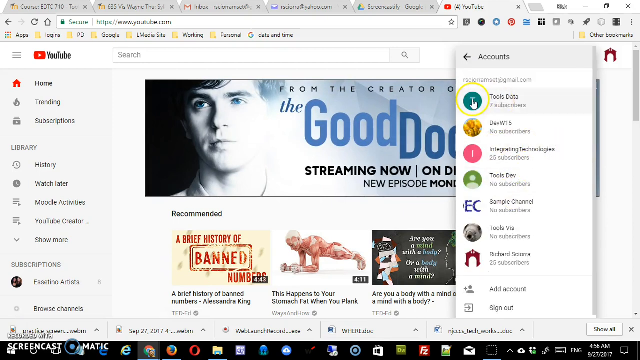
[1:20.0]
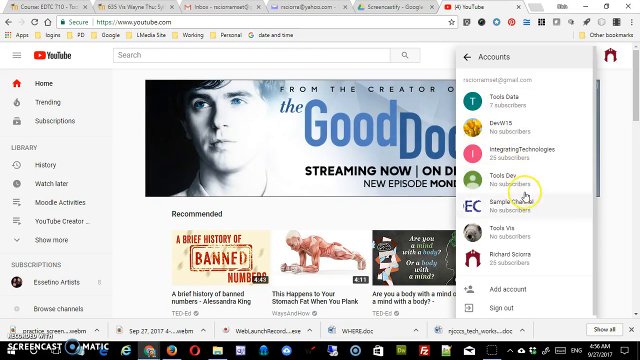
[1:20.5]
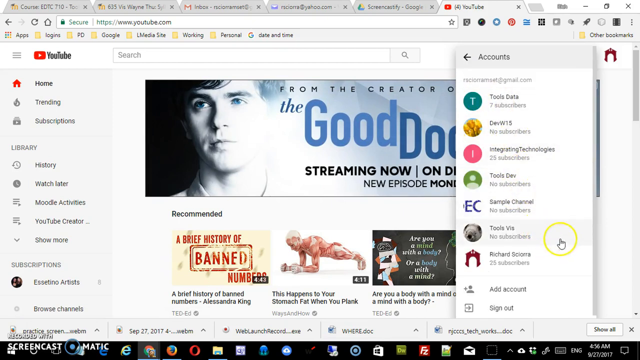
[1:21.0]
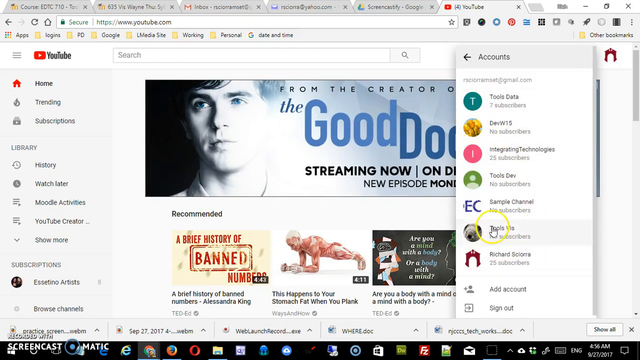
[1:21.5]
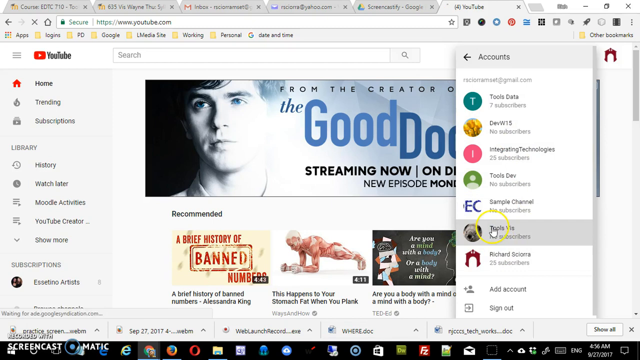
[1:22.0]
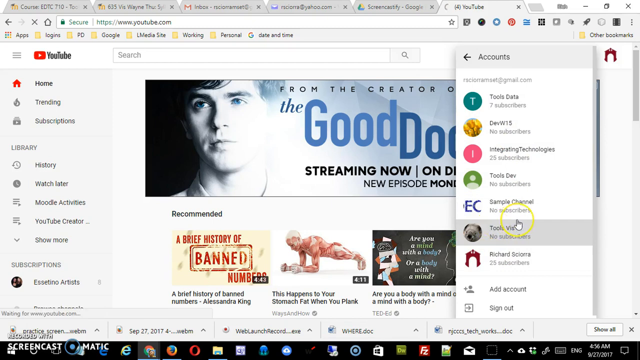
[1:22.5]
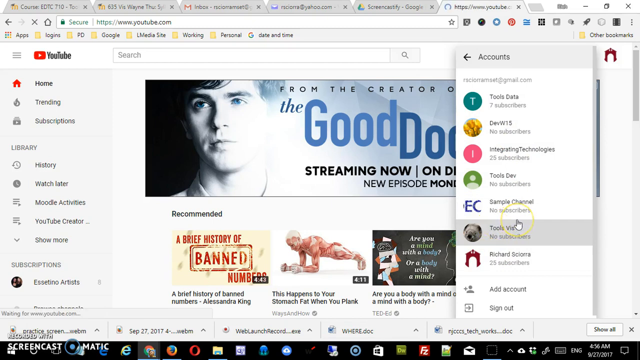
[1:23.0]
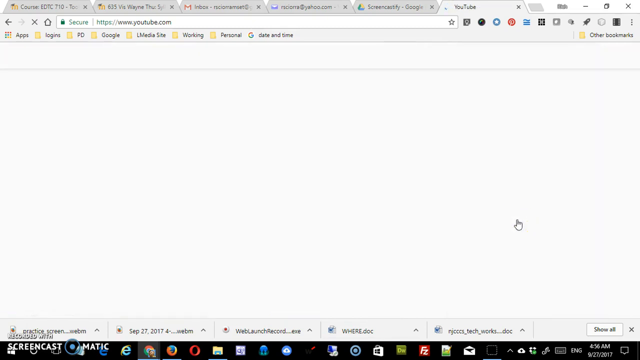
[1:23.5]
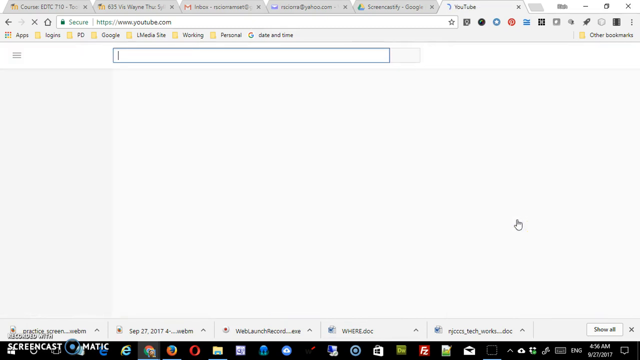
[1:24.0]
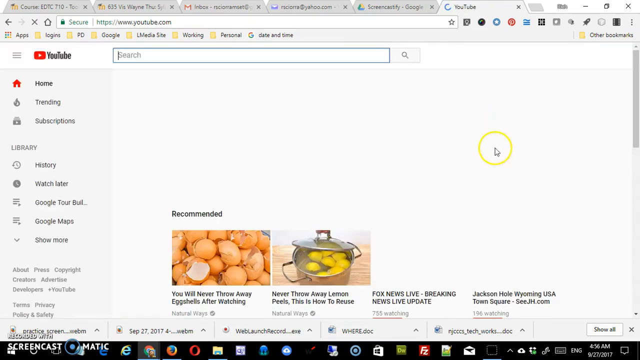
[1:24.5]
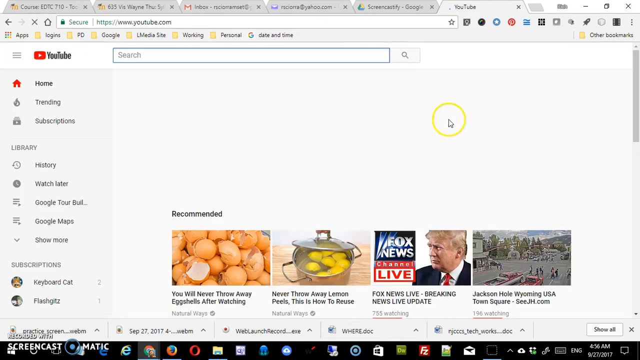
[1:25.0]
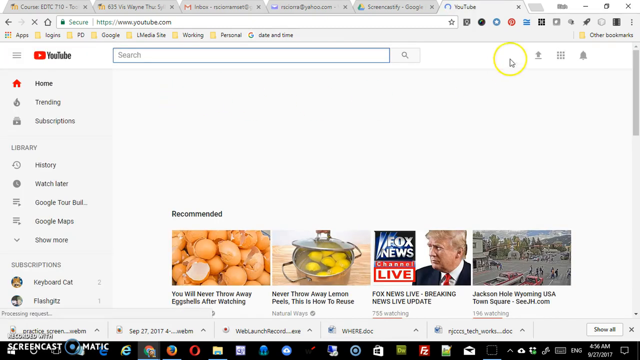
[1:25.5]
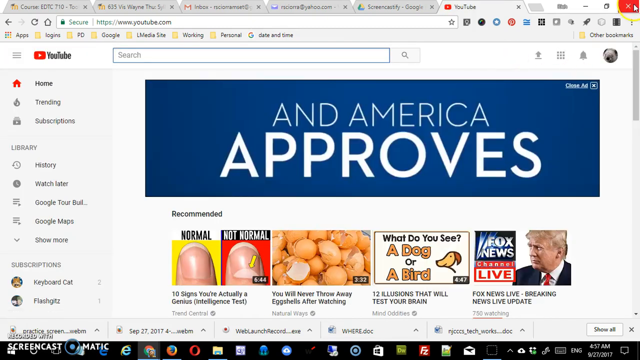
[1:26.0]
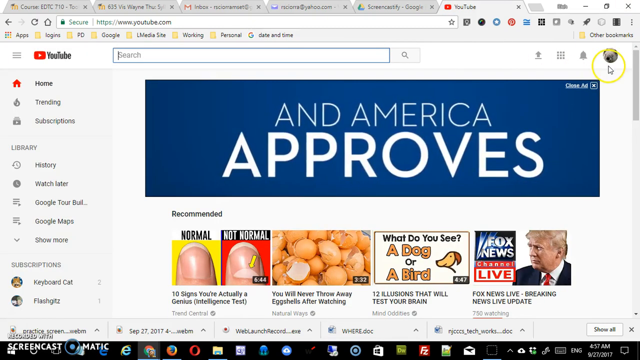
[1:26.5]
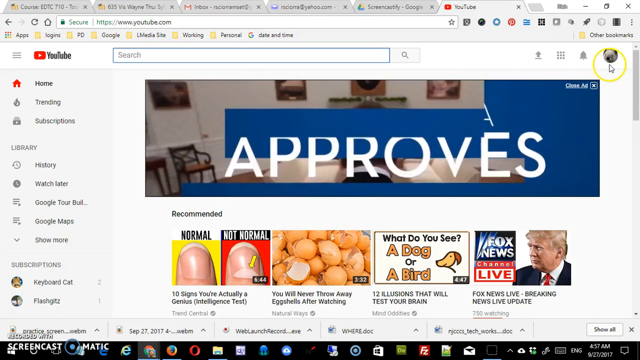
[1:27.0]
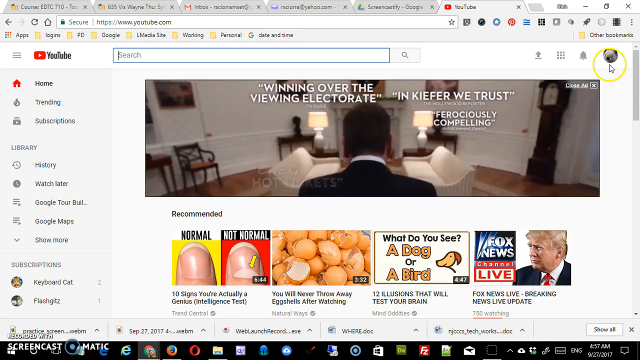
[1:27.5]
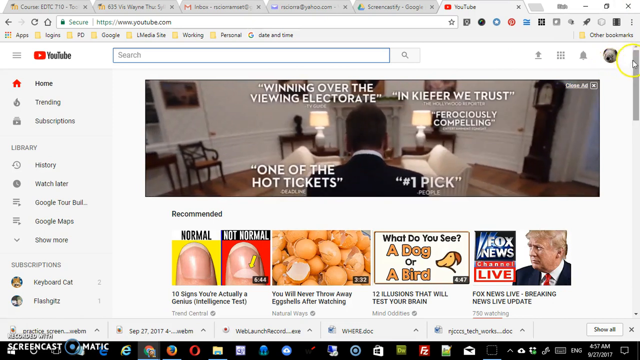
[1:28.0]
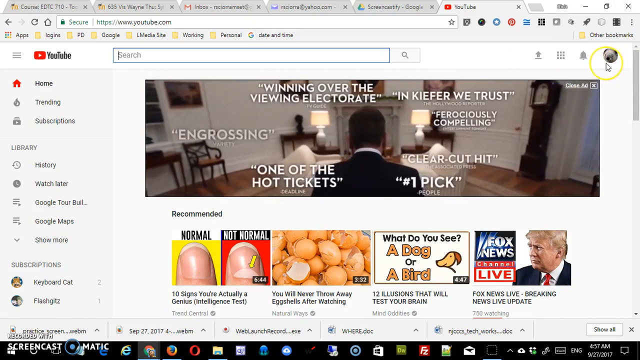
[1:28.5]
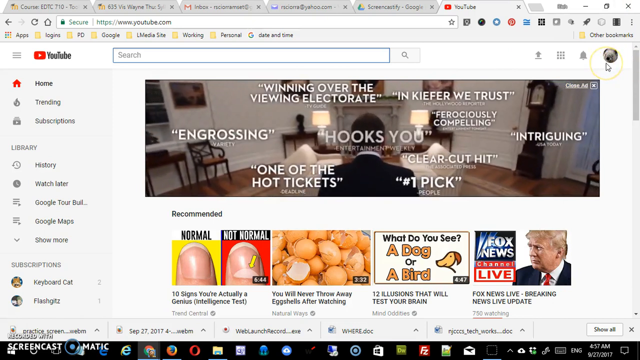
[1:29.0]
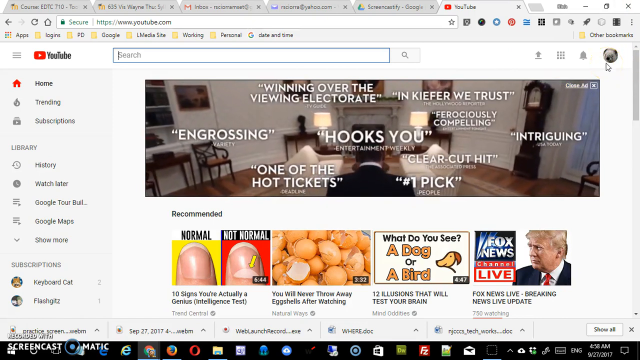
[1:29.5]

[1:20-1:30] A YouTube home page is shown, on Richard's account. He scrolls through a list of names in the side menu, which are people he follows on YouTube, then goes down and clicks one account from the list. This brings up a video of people sitting at a very fancy, high-class looking dinner table, with a back view of one person.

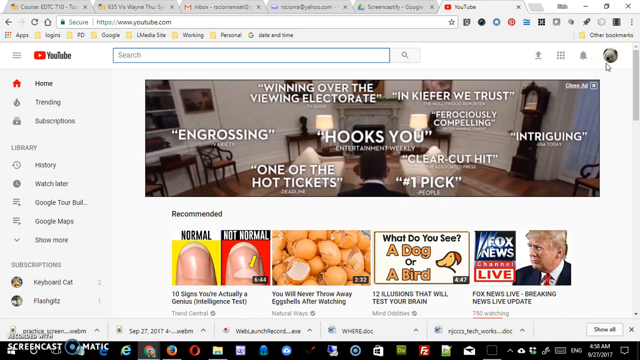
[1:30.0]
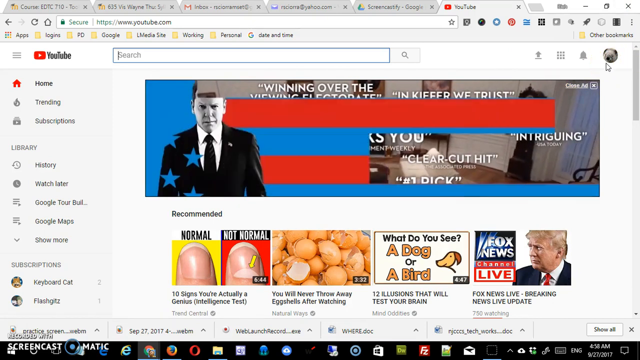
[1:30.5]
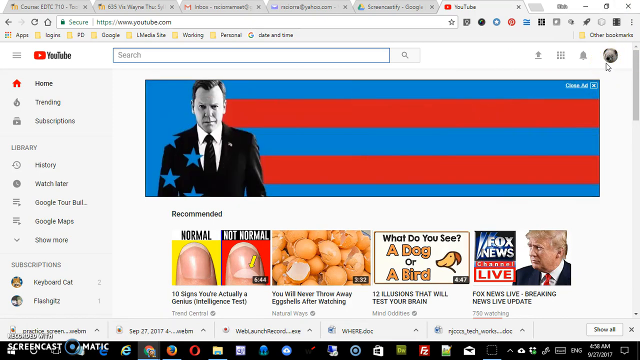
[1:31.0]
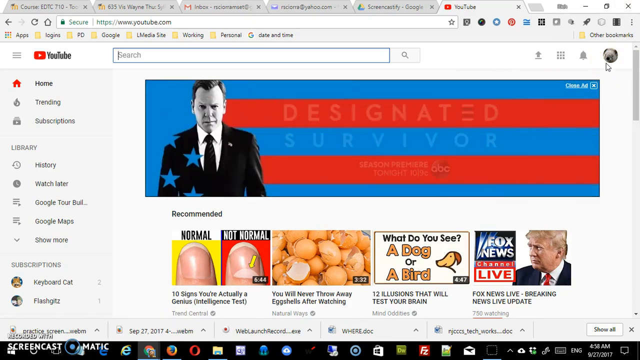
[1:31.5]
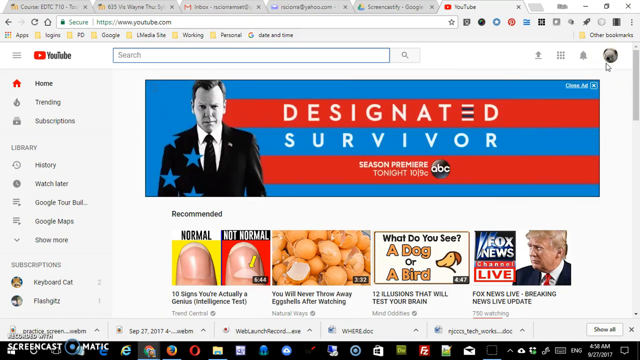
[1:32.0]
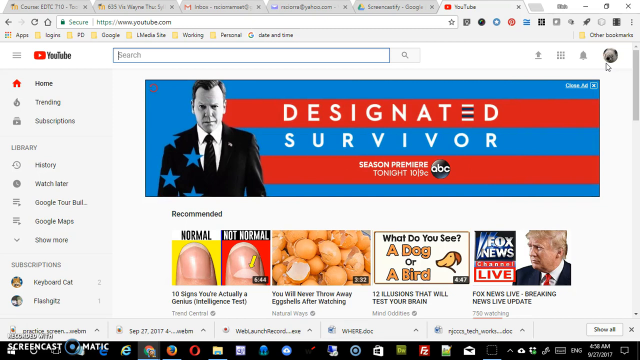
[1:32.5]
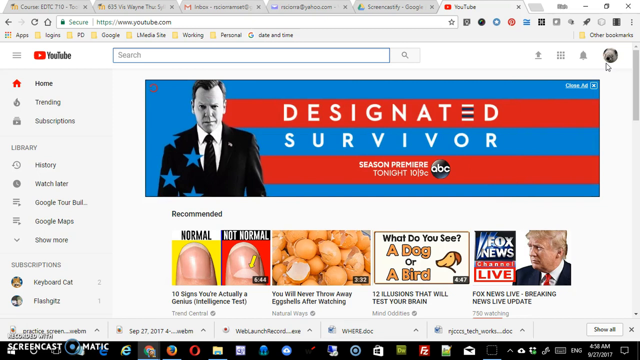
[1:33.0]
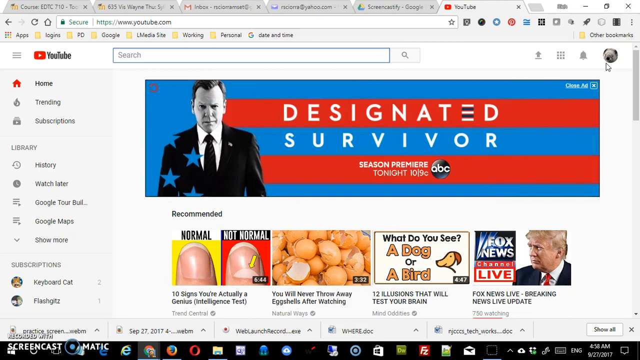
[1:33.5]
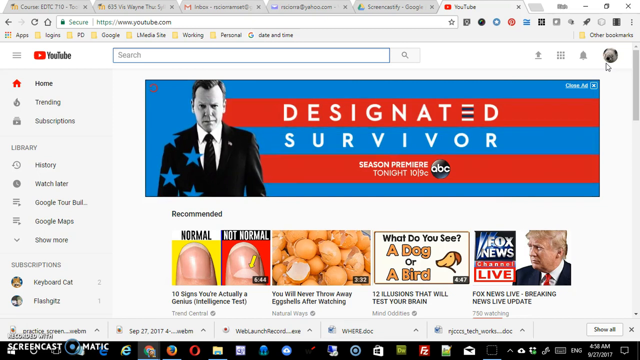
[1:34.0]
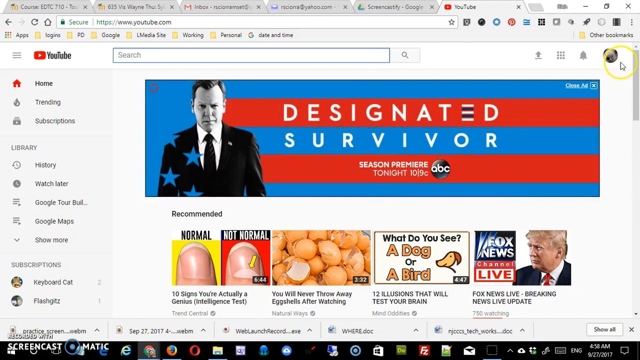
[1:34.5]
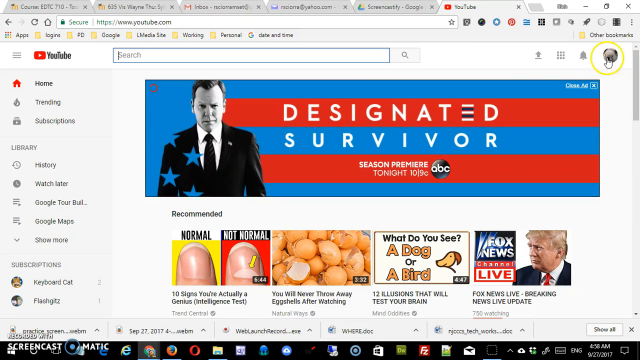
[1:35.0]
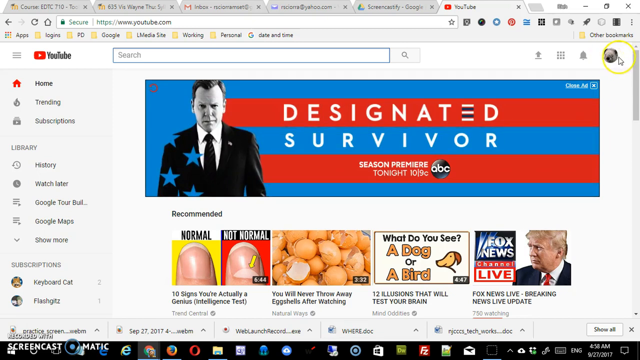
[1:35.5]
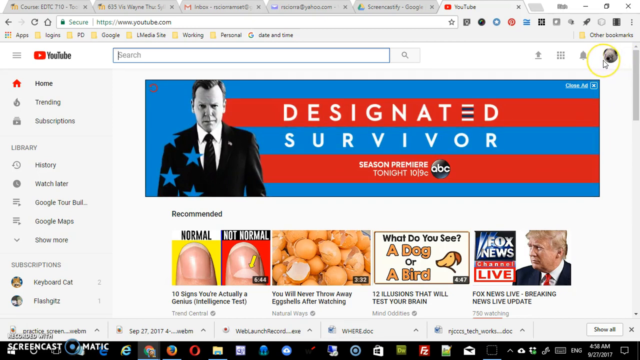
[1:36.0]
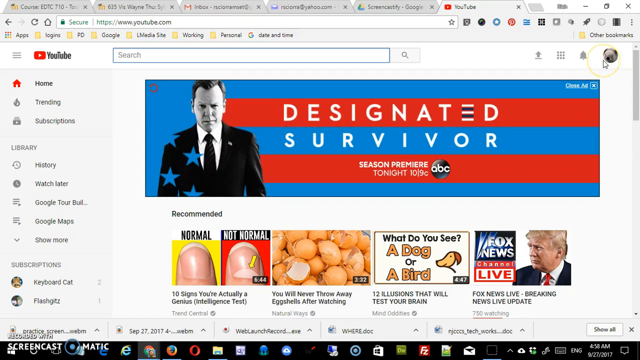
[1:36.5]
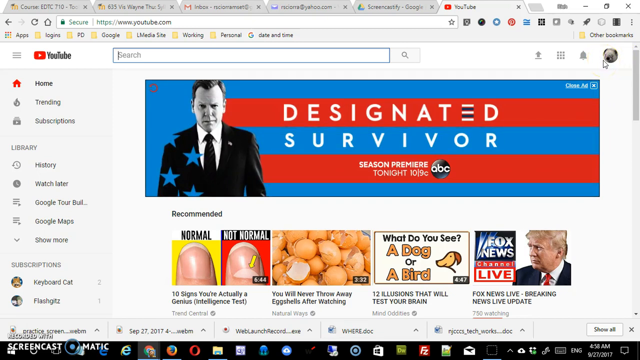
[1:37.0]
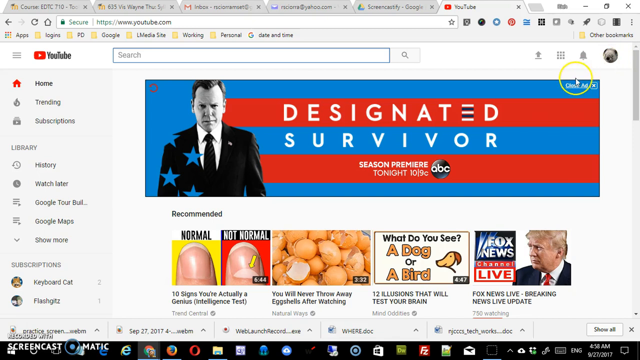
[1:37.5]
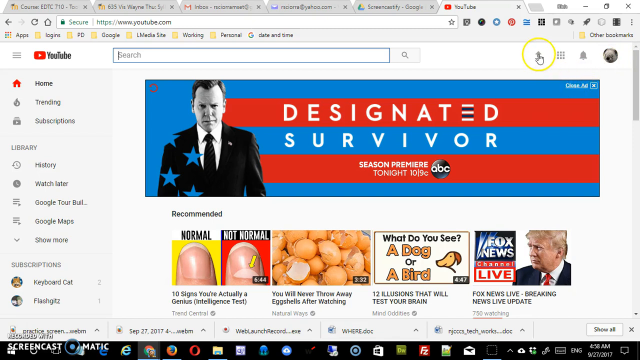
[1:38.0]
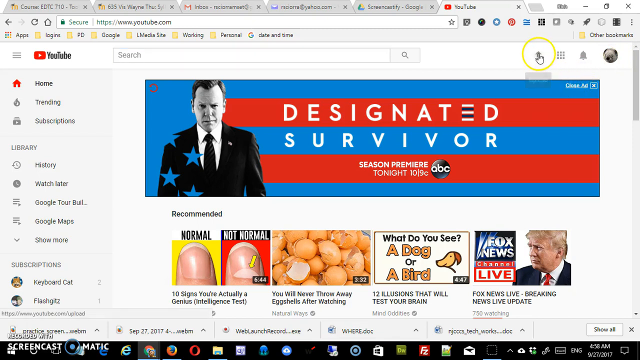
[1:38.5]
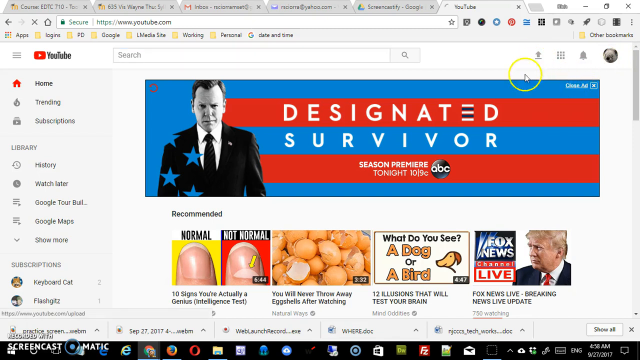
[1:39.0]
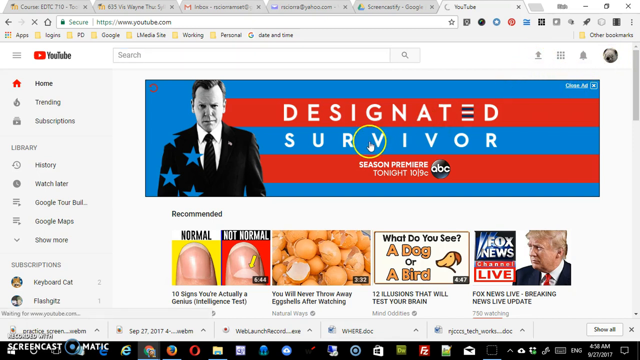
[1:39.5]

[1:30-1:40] A YouTube page shows pictures of fingernails at the bottom, a picture of what looks like oranges or potatoes, and another small picture at the bottom that says "what do you see a dog or a bird"; seen one way the image looks like a parrot, and the other way it looks like a dog. There is also a picture of Fox News channel coverage of Donald Trump, possibly from the inauguration. The words "designated survivor season premiere" pop up across the screen.